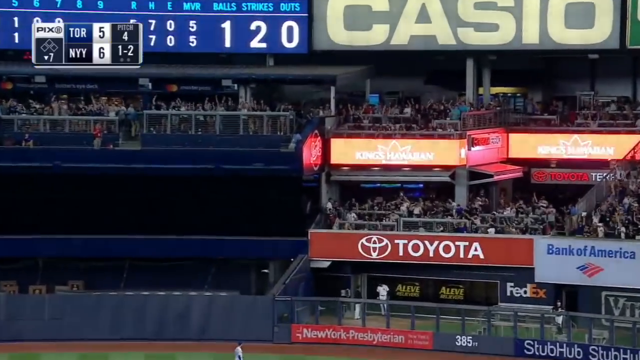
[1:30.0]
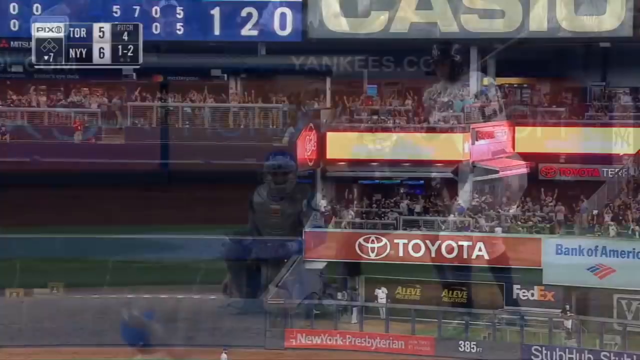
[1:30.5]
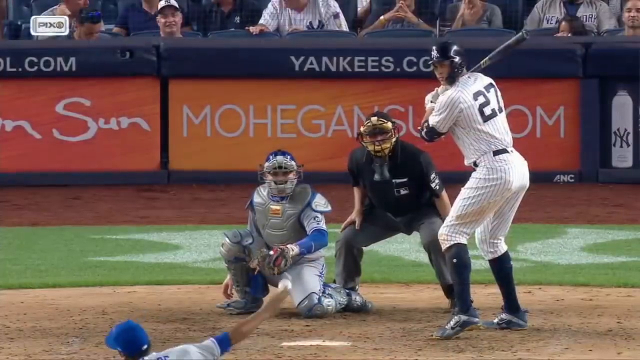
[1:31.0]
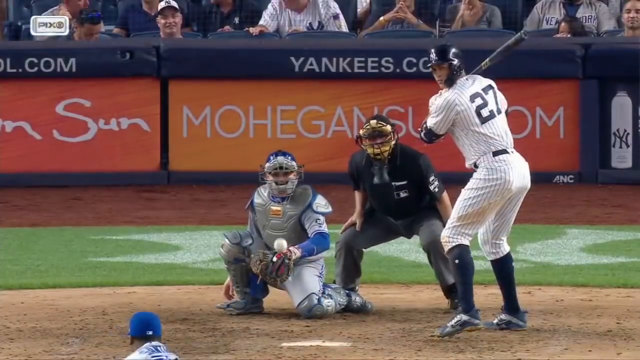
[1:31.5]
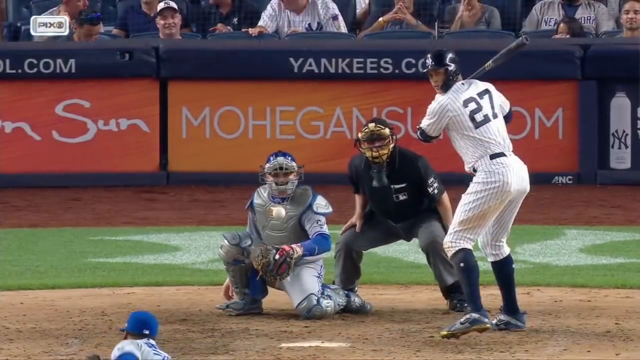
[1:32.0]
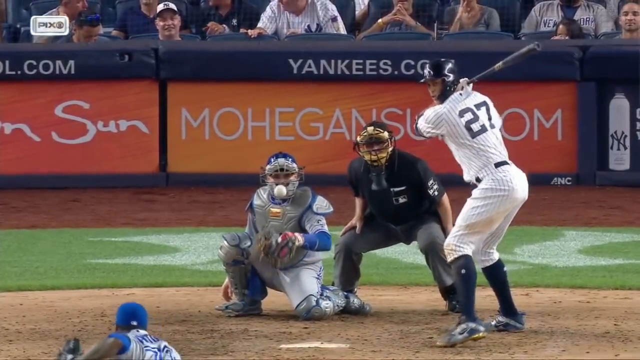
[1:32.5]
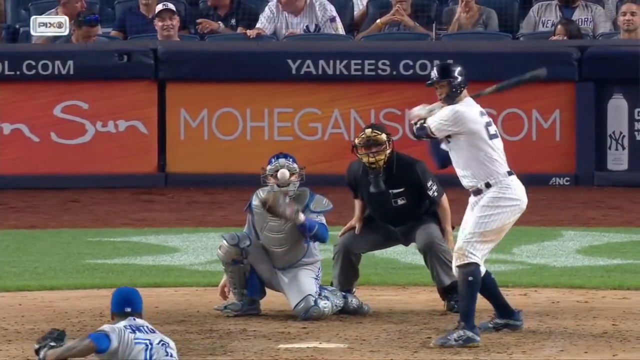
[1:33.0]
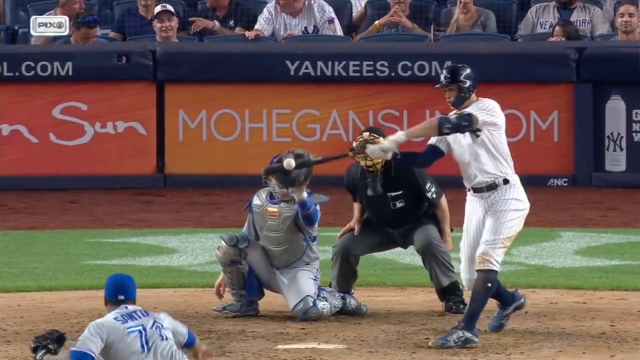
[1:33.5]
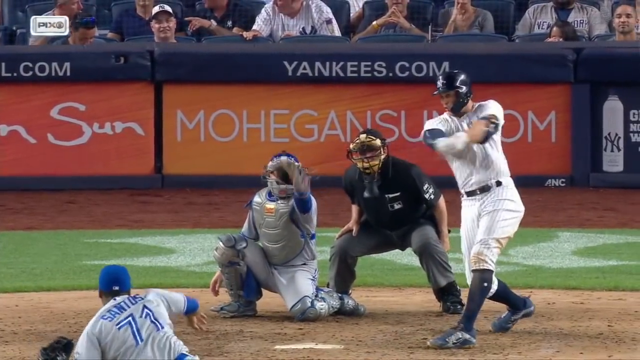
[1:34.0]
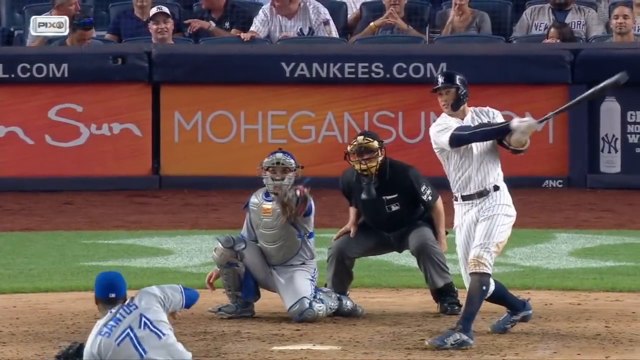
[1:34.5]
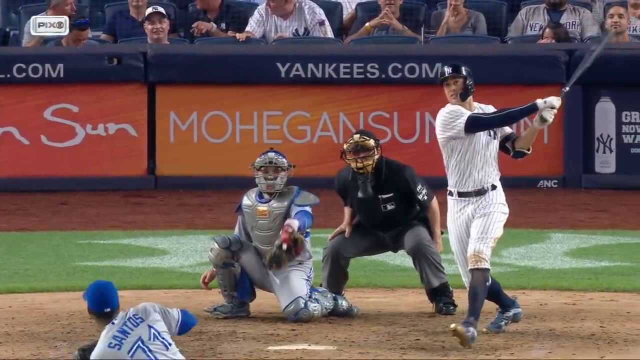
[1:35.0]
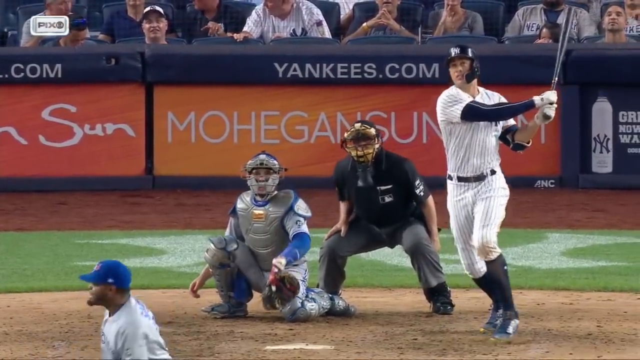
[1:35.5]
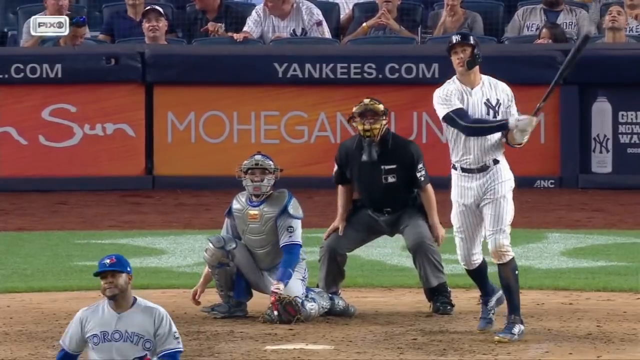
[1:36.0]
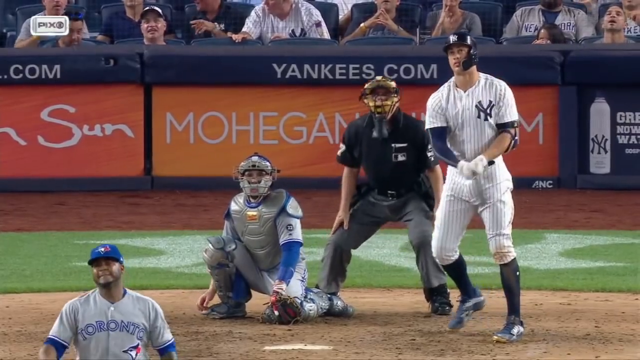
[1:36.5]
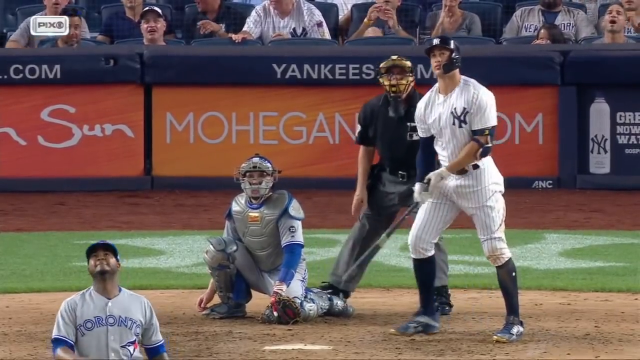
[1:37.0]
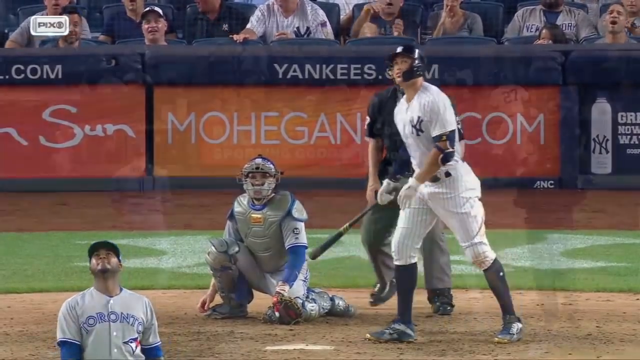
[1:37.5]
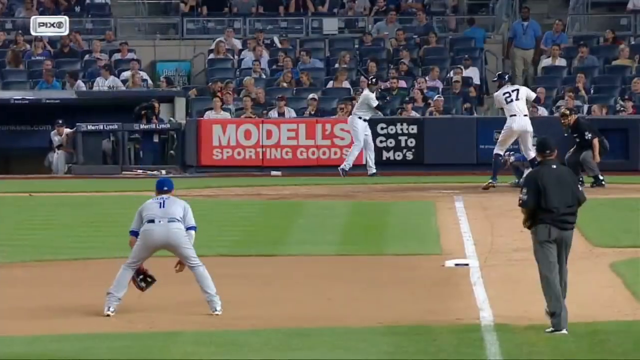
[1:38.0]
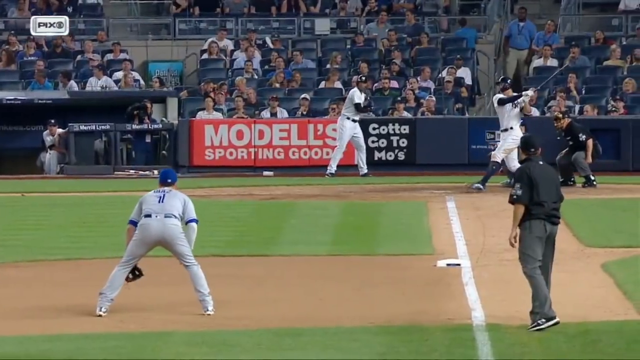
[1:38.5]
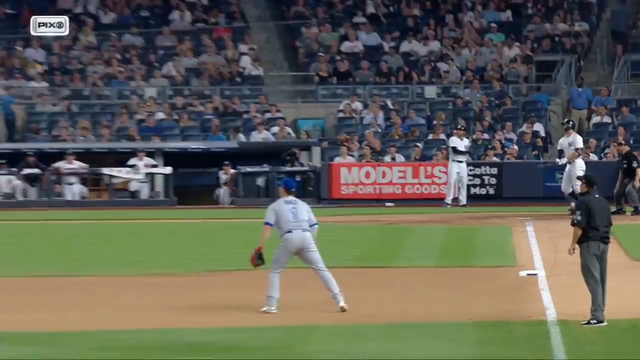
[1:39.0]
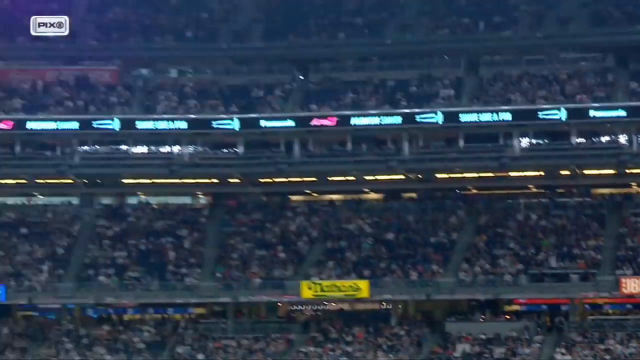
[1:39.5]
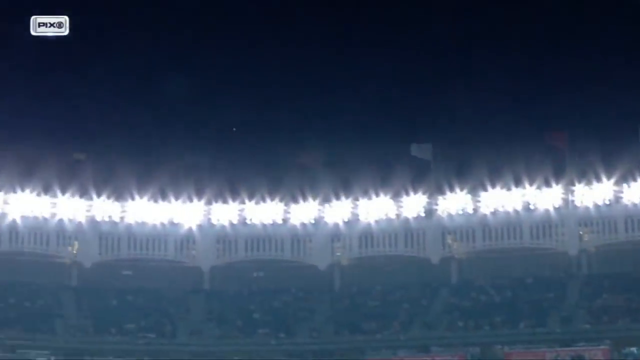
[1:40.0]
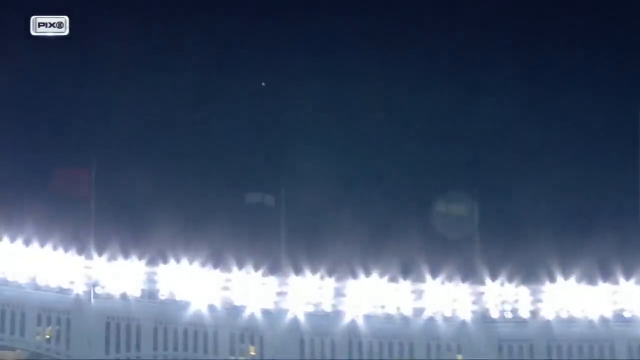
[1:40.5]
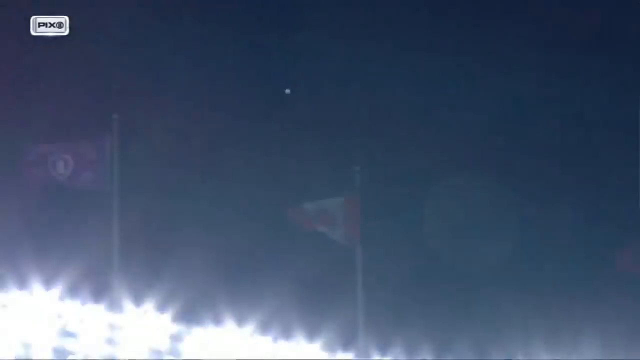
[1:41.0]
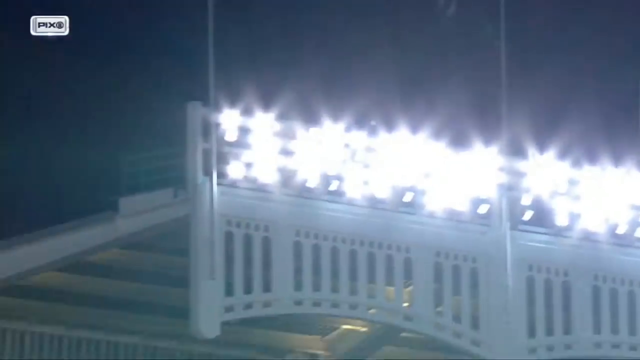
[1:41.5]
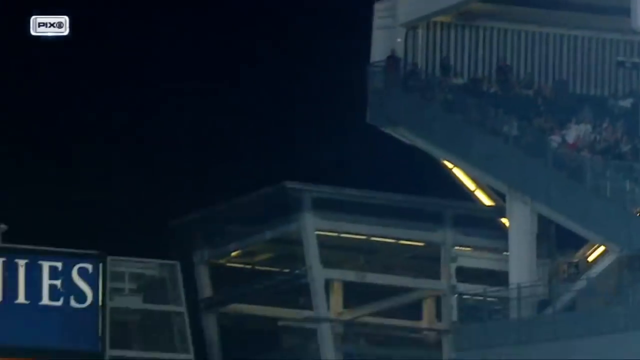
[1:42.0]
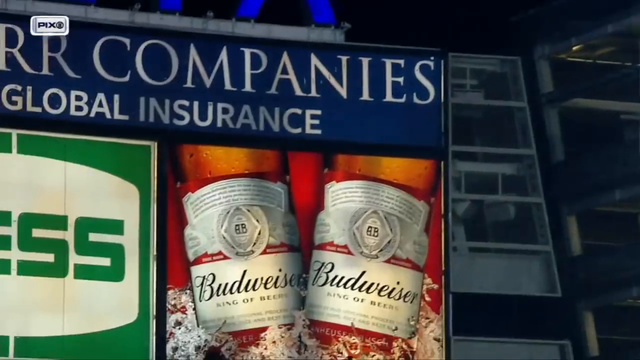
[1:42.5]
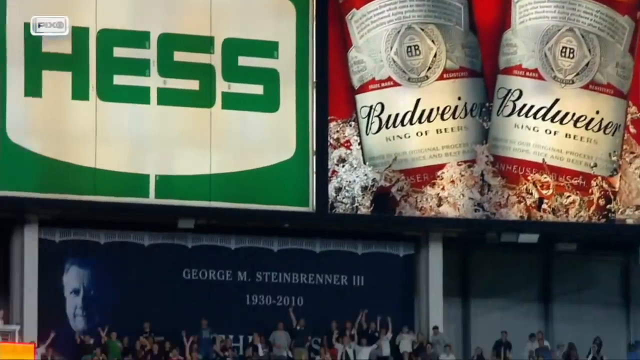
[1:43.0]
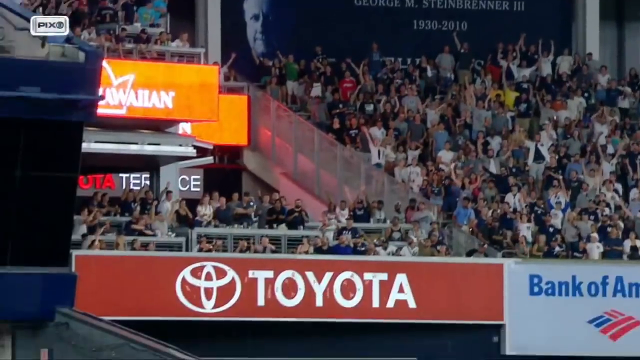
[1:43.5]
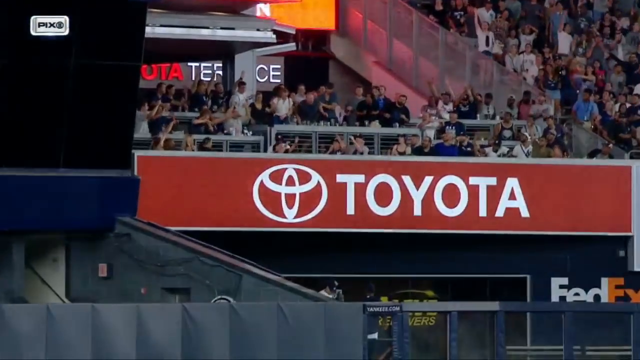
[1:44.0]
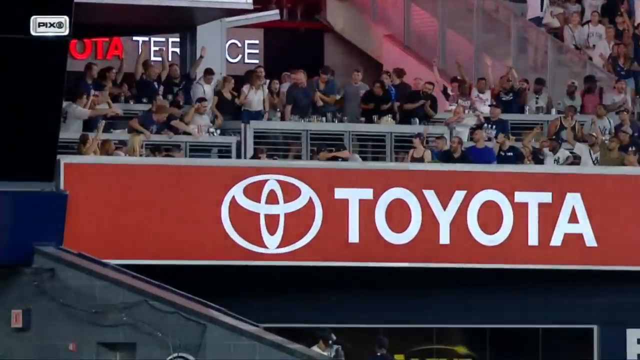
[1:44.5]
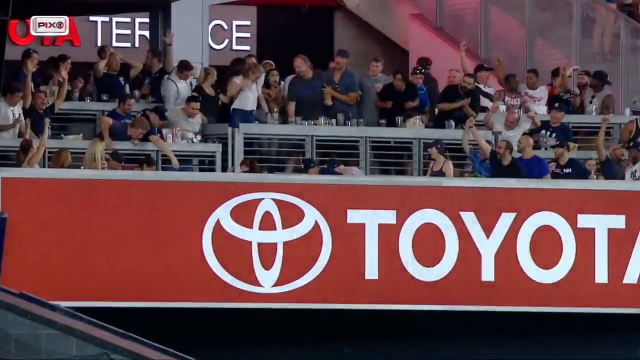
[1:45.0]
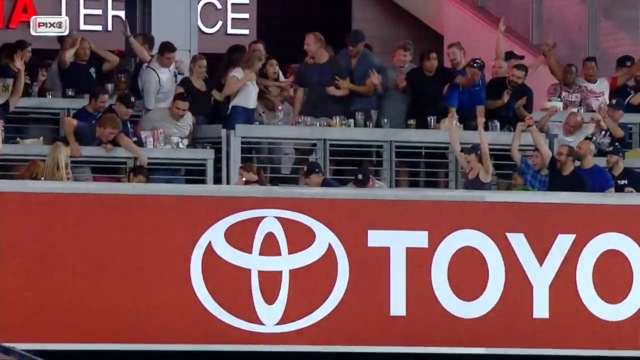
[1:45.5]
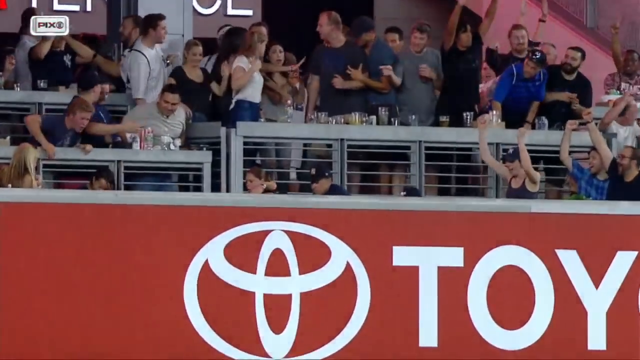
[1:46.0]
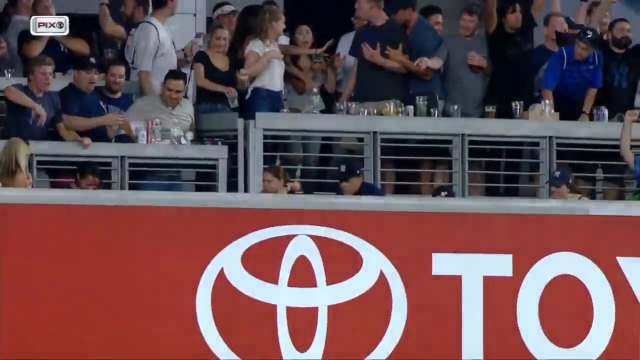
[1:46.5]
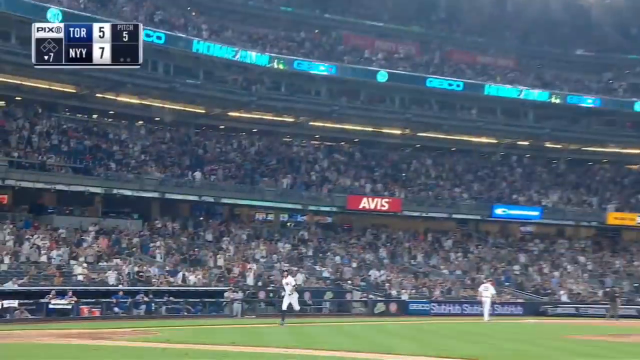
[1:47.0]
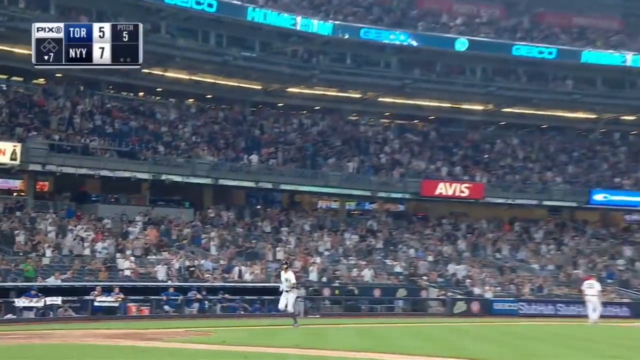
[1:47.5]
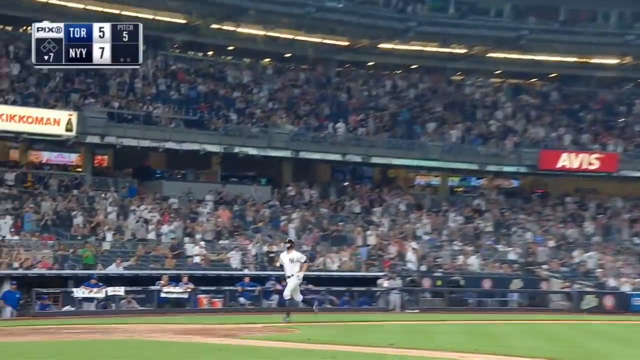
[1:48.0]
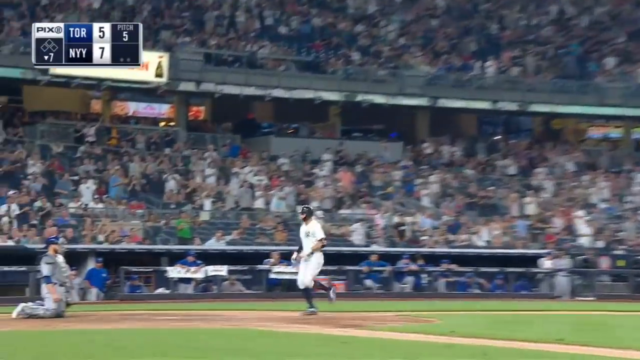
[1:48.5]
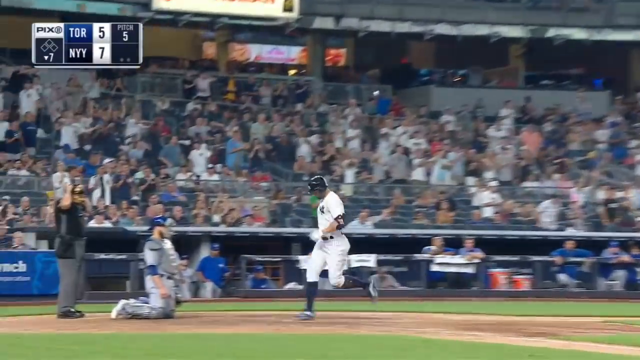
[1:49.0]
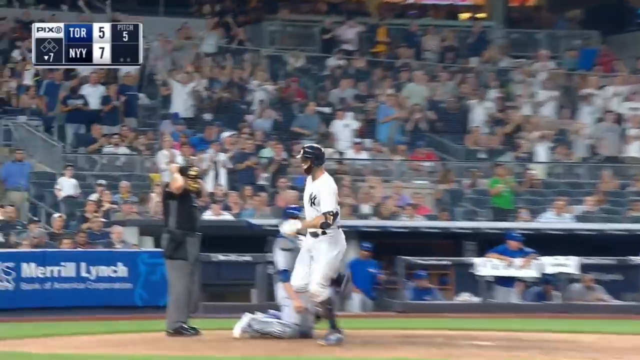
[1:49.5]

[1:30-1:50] A slow-motion replay of the pitch plays. In the background is a logo reading "yankees.com", with an orange advertising hoarding bearing a company name beneath it. The umpire, wearing a face mask, is behind the batter, and the catcher kneels on the ground behind the batter. The ball comes in very slowly and is struck very well. The batter follows the ball, looking up into the sky, before the camera angle switches to the ball flying high into the second tier of the stadium, where the crowd on the second level catches it. The batter then goes all the way around the bases for a home run. The shot ends with another view of the scoreboard showing player stats, with "Casio" written at the bottom.